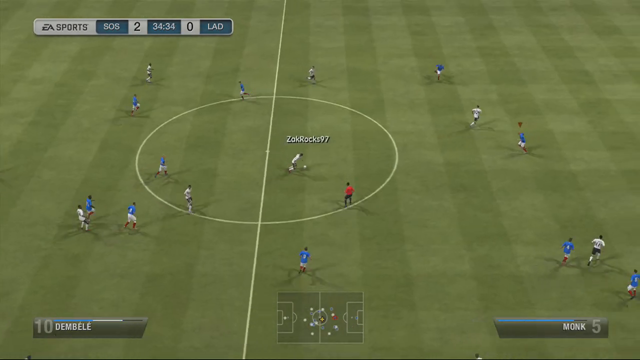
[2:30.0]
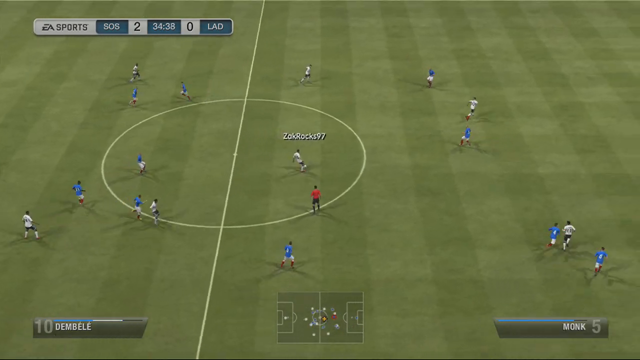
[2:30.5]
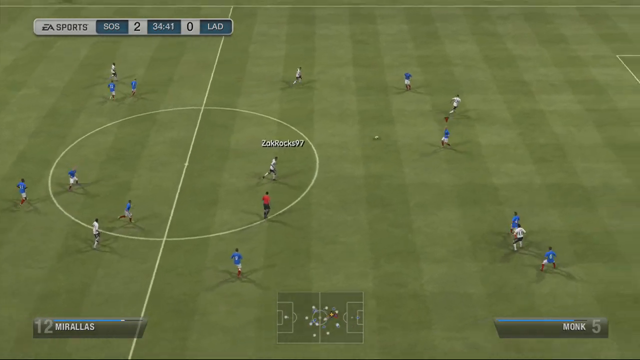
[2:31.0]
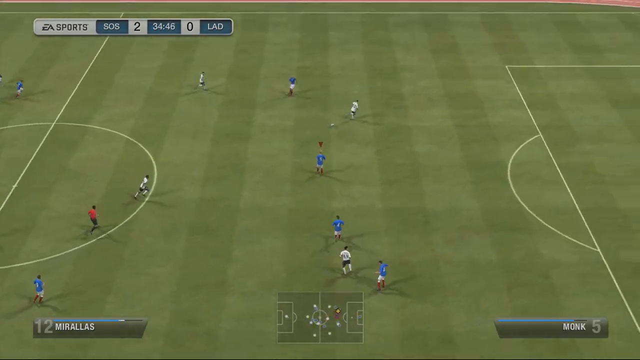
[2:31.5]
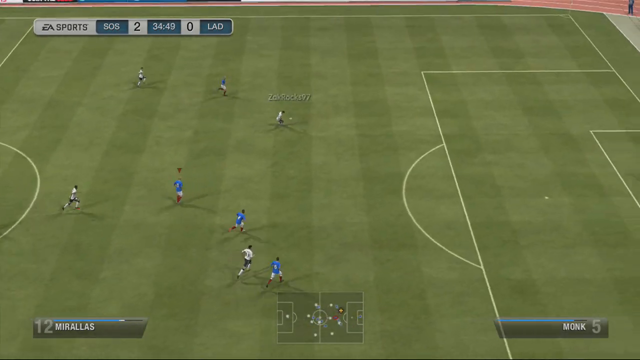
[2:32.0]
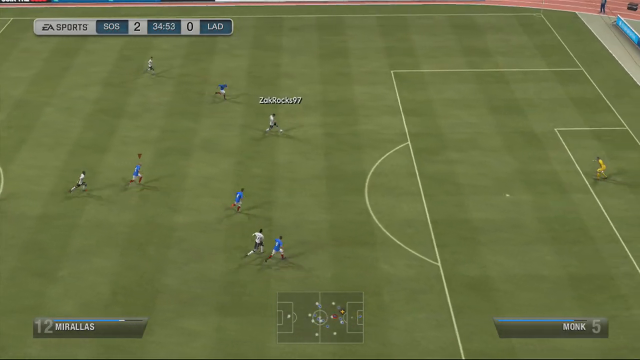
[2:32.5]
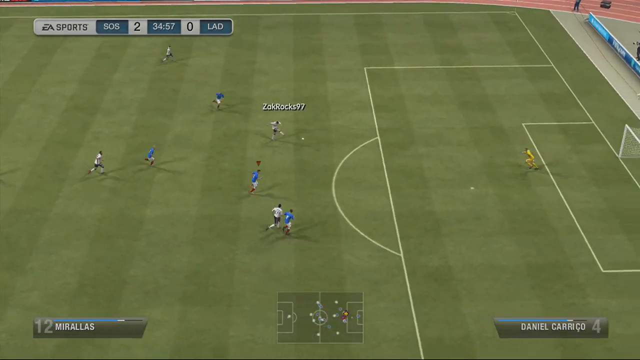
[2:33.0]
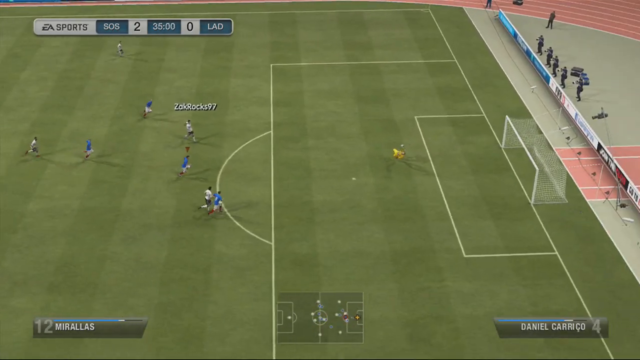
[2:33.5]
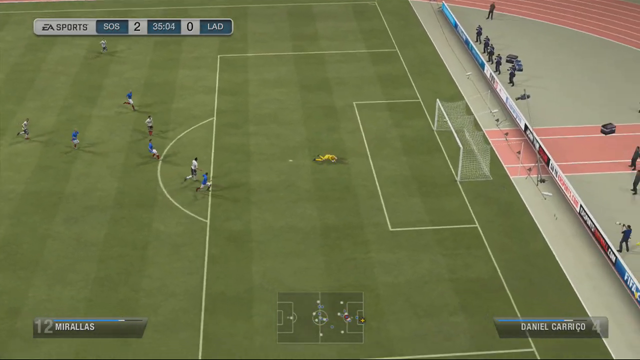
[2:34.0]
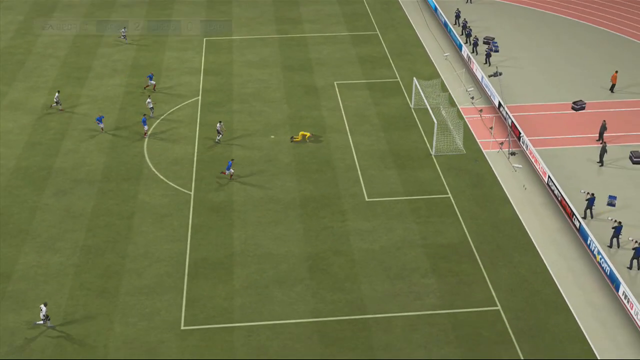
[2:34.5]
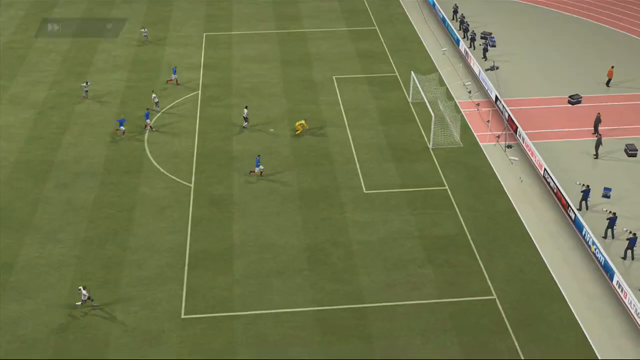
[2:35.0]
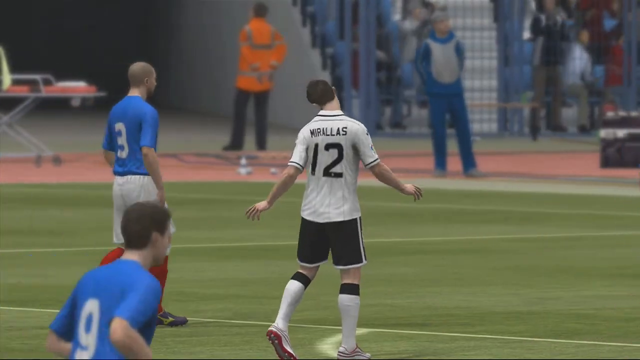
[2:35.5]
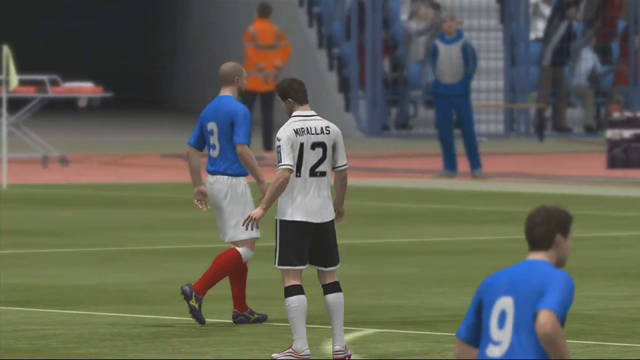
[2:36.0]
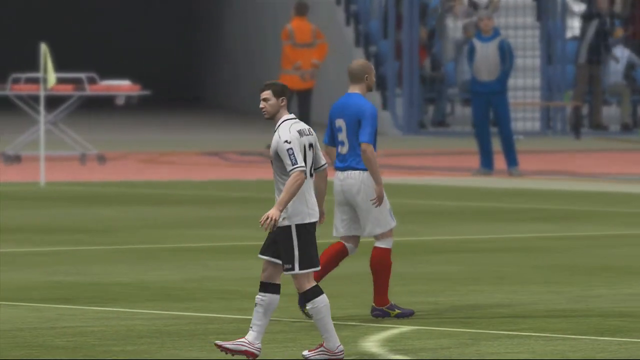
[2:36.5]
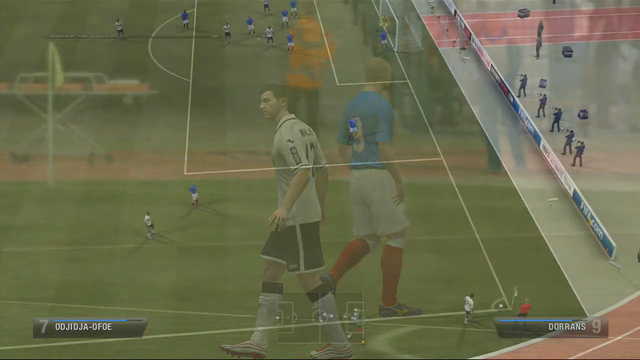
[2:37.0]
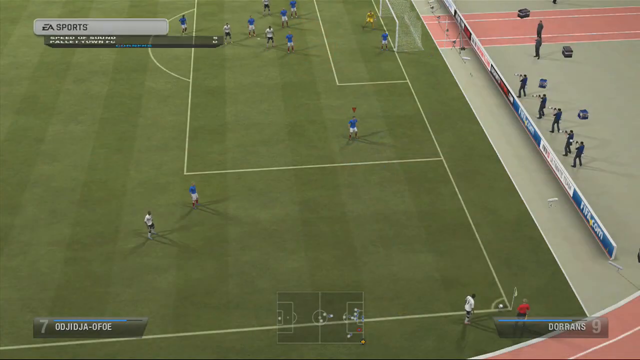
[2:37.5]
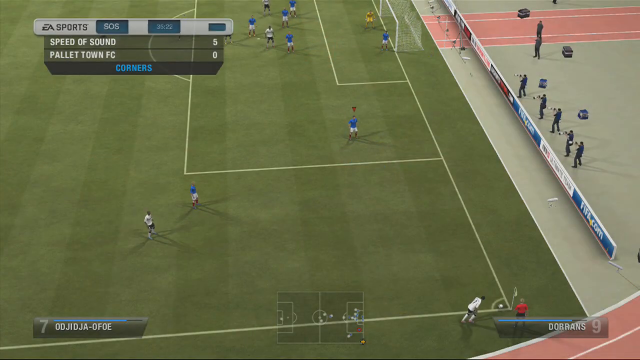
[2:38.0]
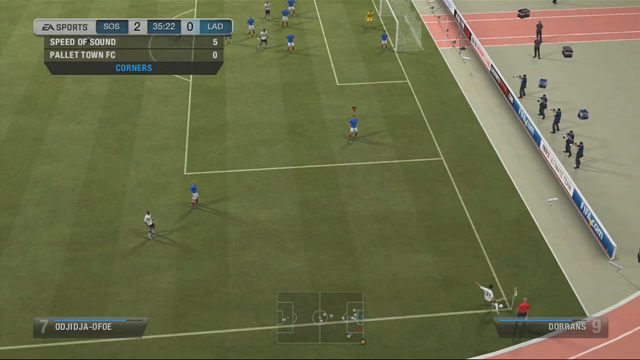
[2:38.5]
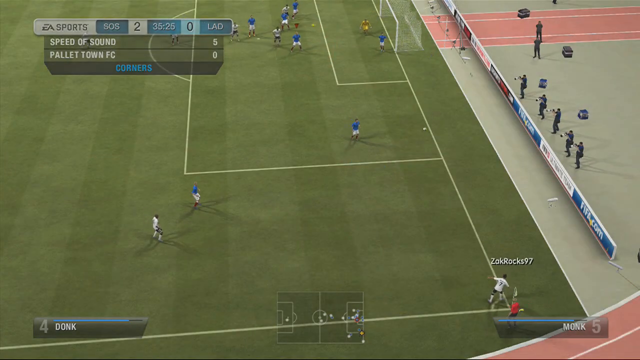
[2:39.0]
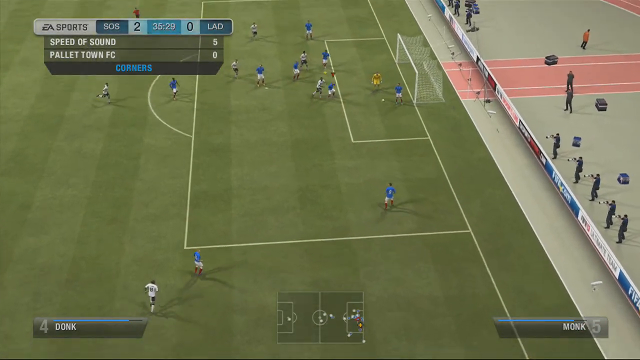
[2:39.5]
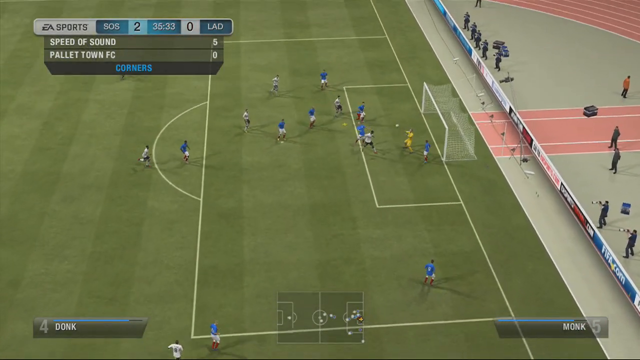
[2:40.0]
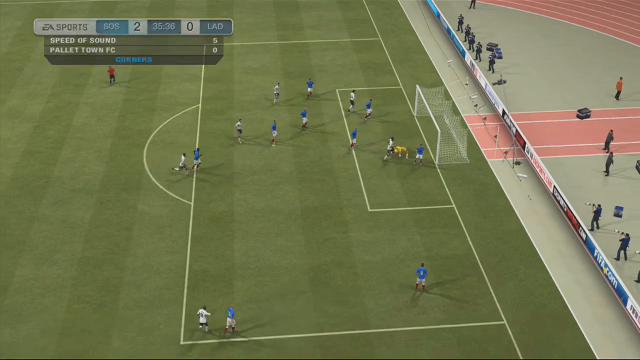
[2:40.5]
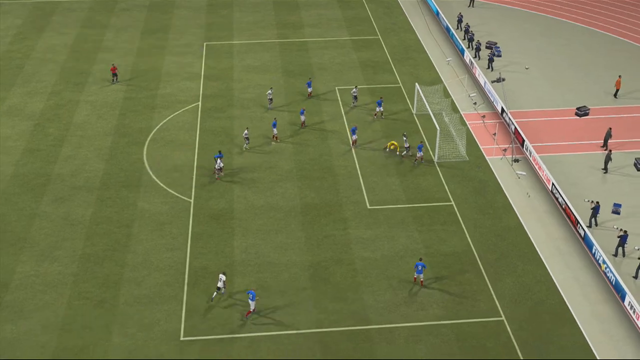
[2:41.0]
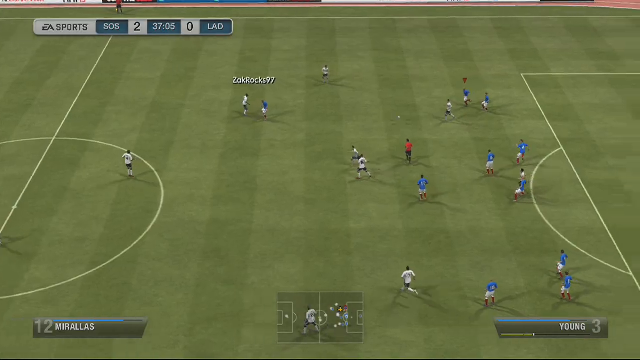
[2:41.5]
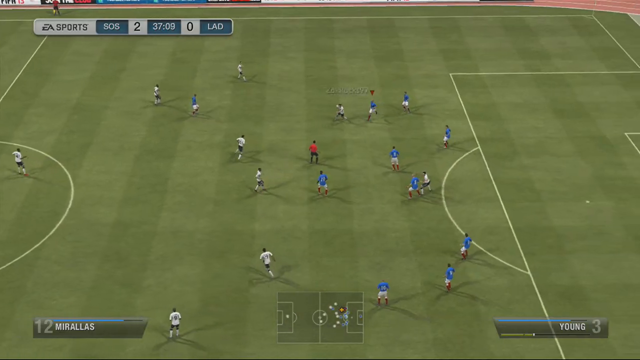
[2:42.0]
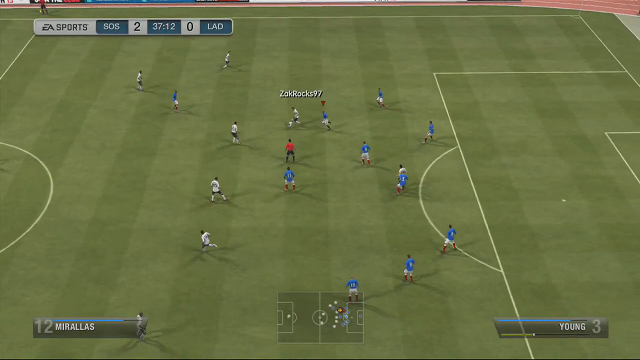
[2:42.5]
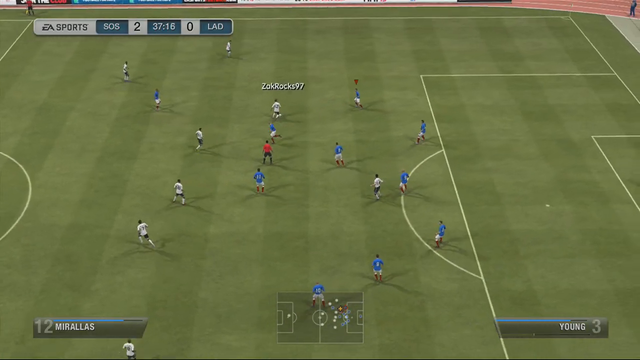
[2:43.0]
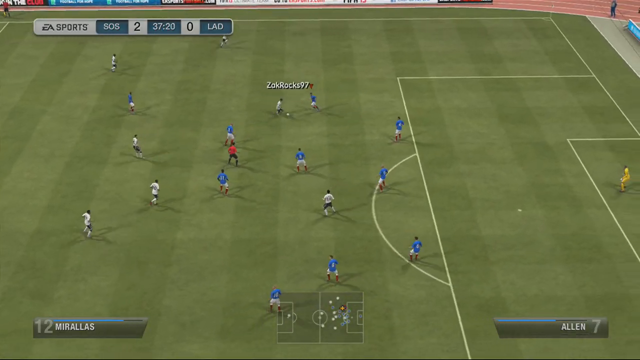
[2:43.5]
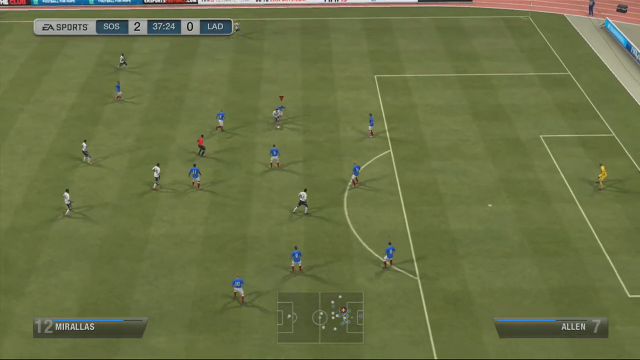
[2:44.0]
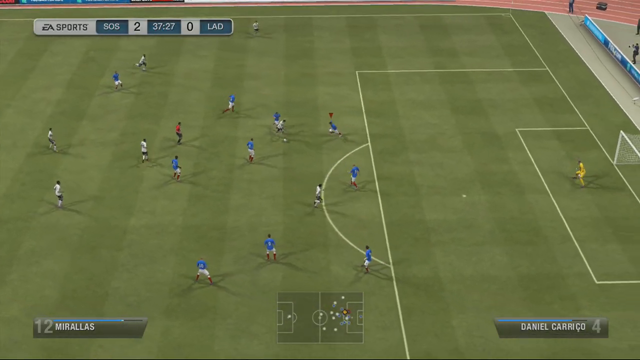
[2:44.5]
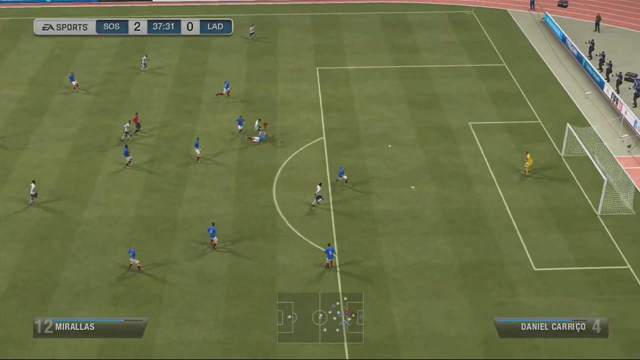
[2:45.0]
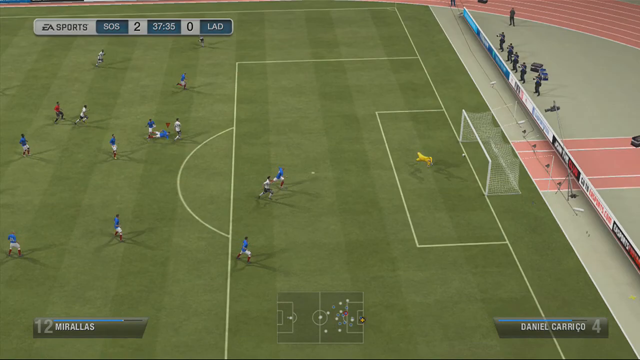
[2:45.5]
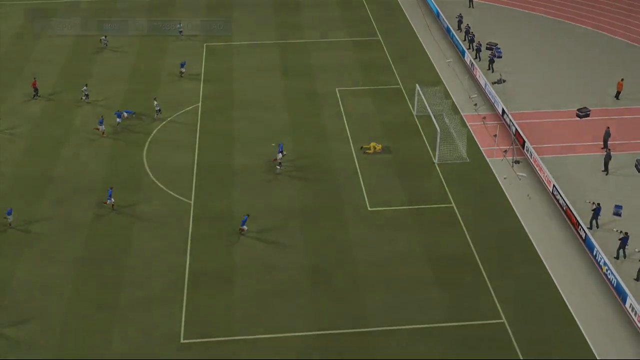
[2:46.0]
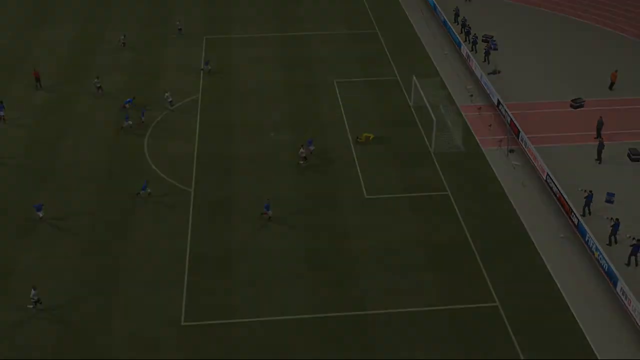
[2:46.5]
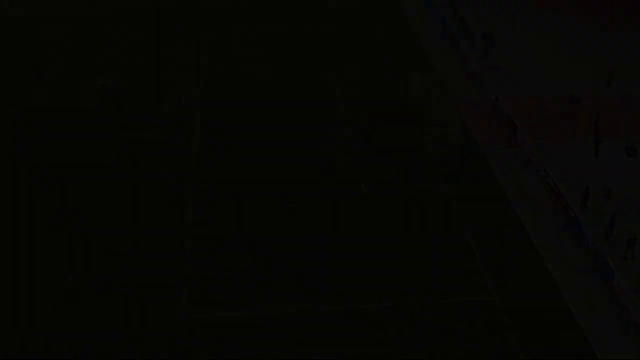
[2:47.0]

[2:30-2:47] A soccer video game shows the light green and slightly darker green striped field. One team wears short-sleeved blue shirts with white shorts, and the other wears short-sleeved white shirts with black shorts. A player from the white team charges toward the goal and kicks the ball toward it. The goalie, in a yellow short-sleeved shirt and yellow shorts, standing in front of a goal that is a white square with a net off the back of it, kicks it back out, and the player in white misses the goal. A close-up shows him from the back: his white shirt has "Morales" at the top with the number 12 underneath, and his arms are out to his sides as if he is upset about missing. The video then cuts to a man standing out of bounds who kicks the ball in to someone, and that person kicks it toward the goal but misses.